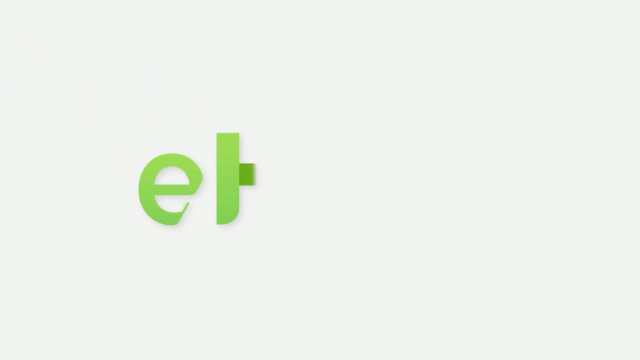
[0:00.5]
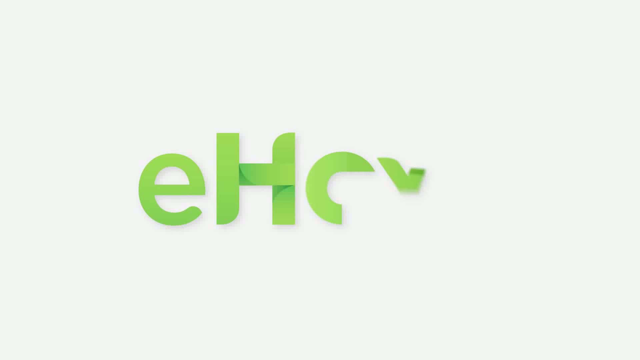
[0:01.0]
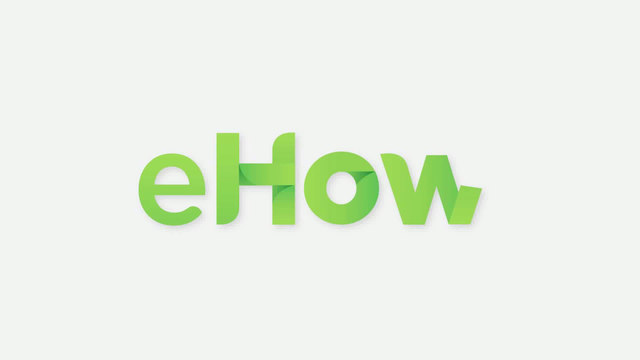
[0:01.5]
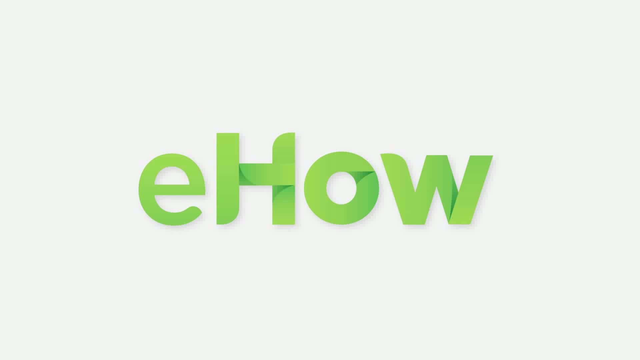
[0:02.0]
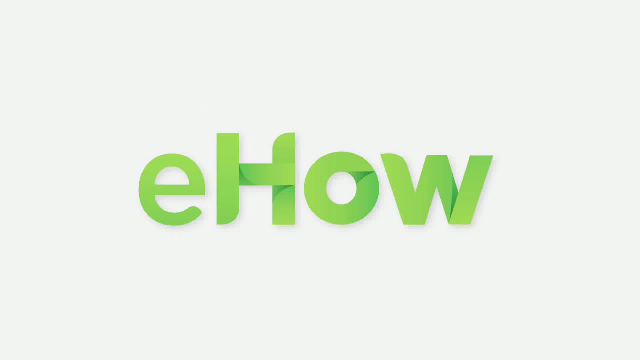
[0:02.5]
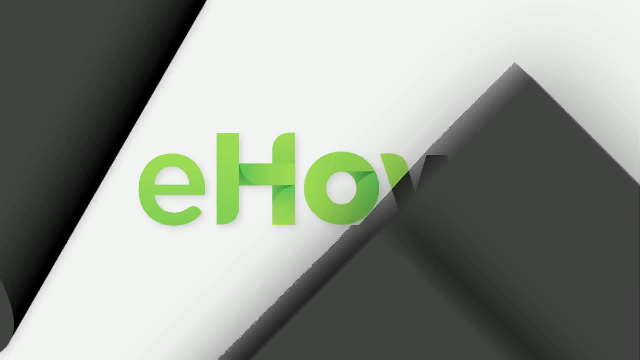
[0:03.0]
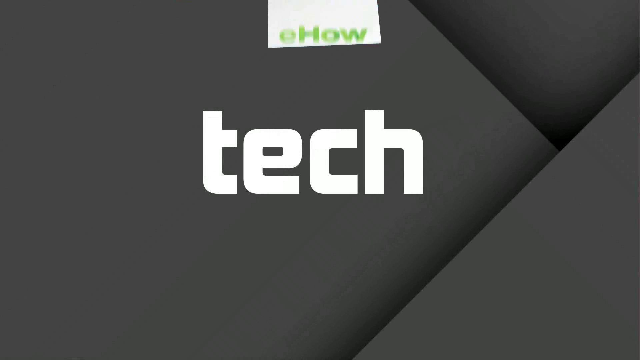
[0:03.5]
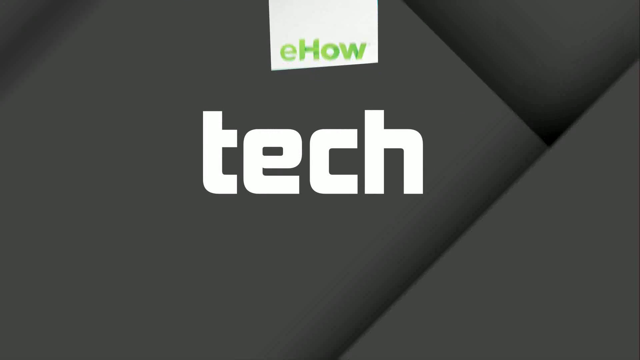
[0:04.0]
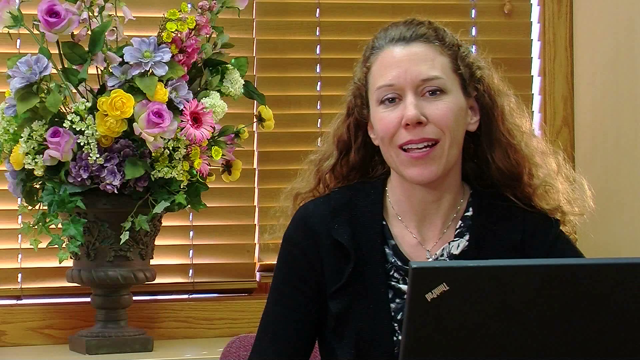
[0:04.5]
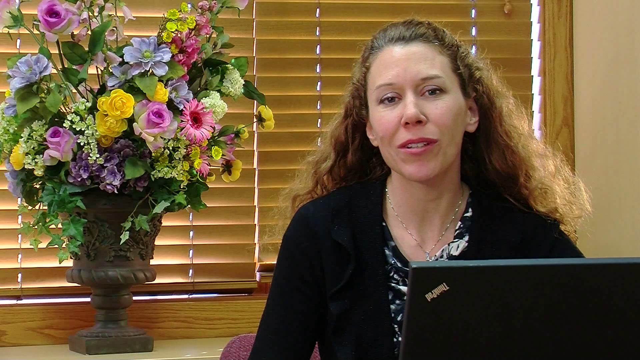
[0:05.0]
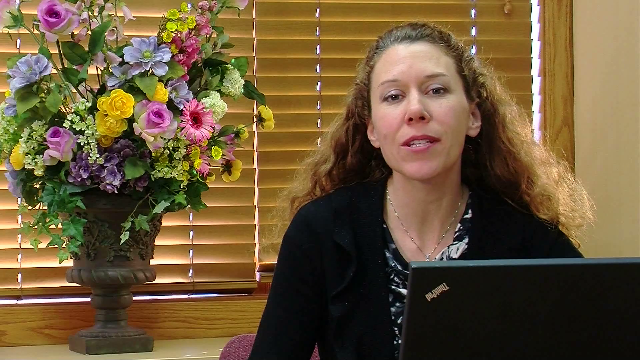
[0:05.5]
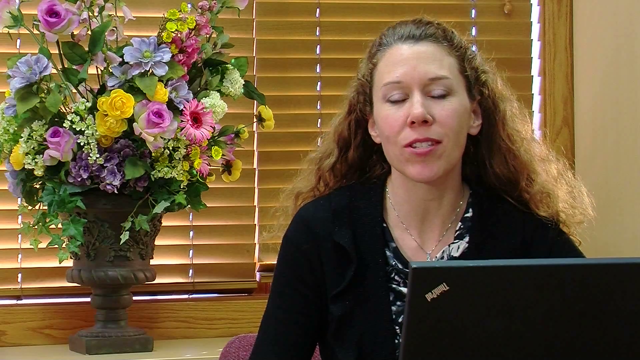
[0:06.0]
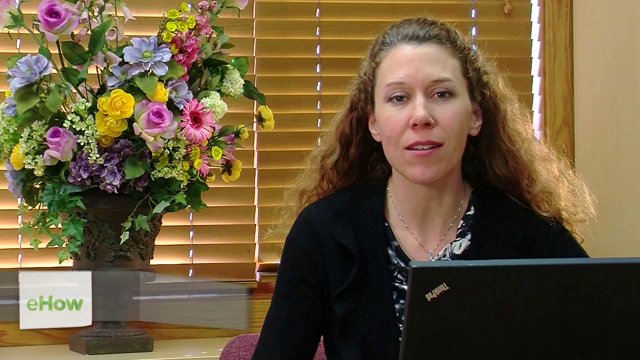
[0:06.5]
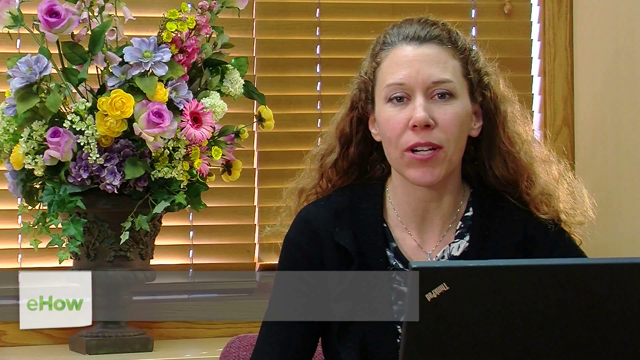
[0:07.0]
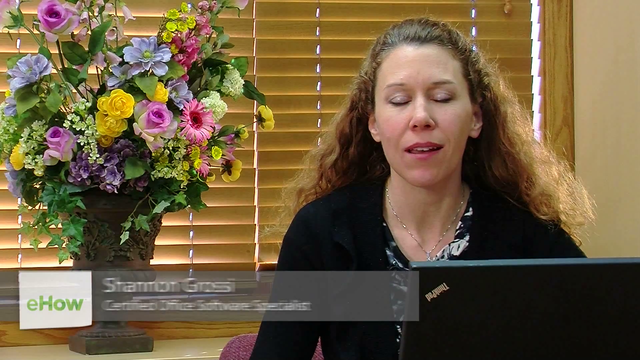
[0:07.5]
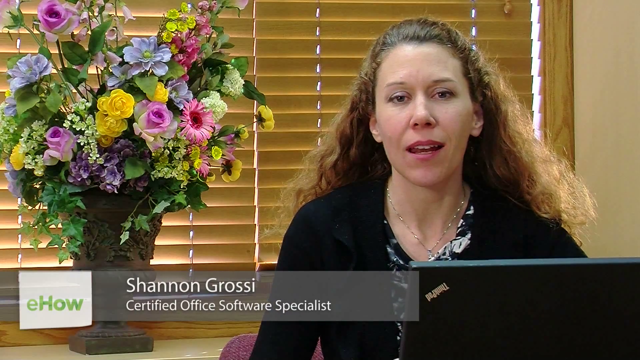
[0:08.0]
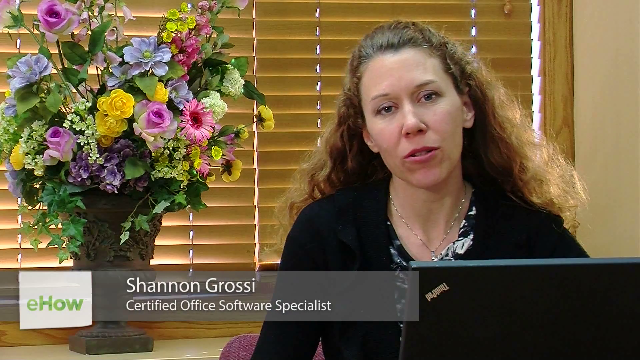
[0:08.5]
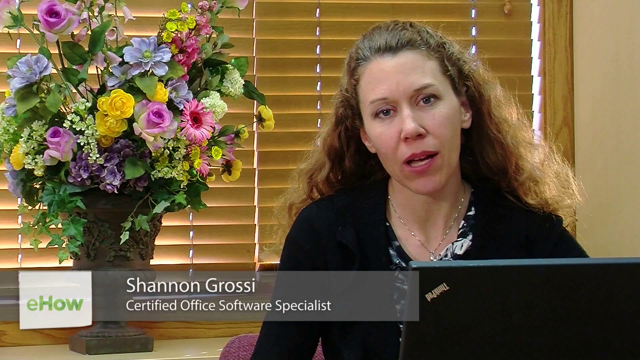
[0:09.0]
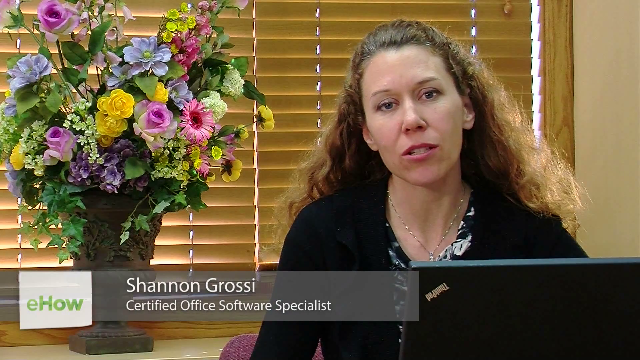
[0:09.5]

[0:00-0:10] The video opens with the eHow logo, then switches to a screen with the word "Tech" on it. Next, a woman in an office setting talks directly to the camera; she appears to be sitting behind a computer monitor. A banner appears below her reading "Shannon Grassi, Certified Office Software Specialist." To the left of her in the frame is a big vase full of flowers that look like all different types, in yellow, pink, red and blue. Behind the flowers is a window with blinds covering it.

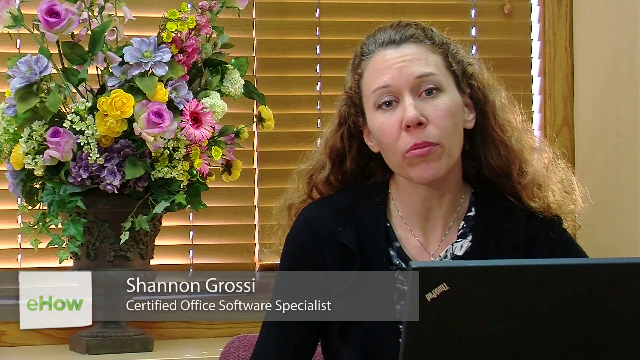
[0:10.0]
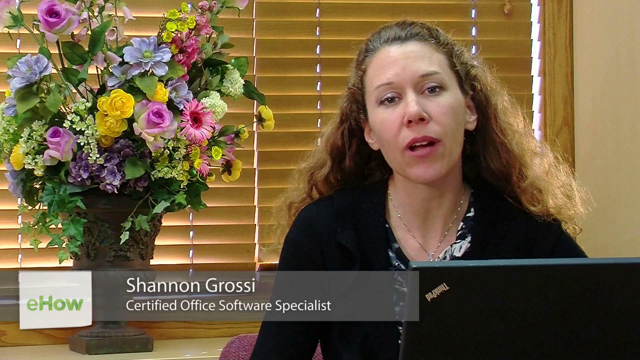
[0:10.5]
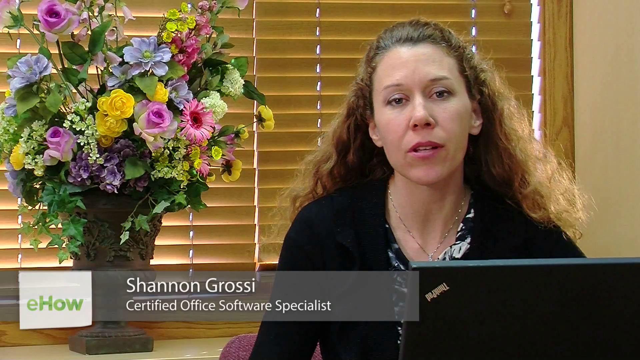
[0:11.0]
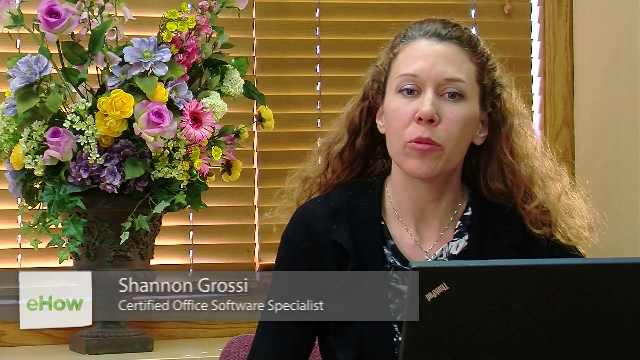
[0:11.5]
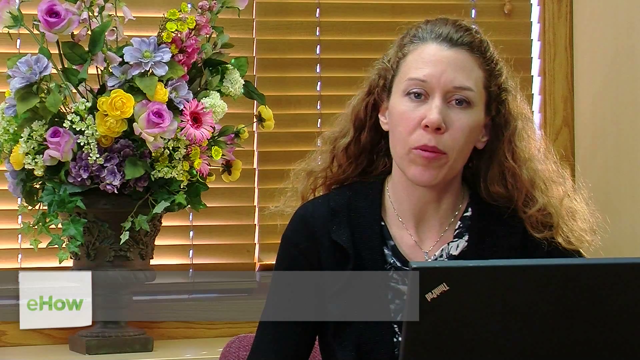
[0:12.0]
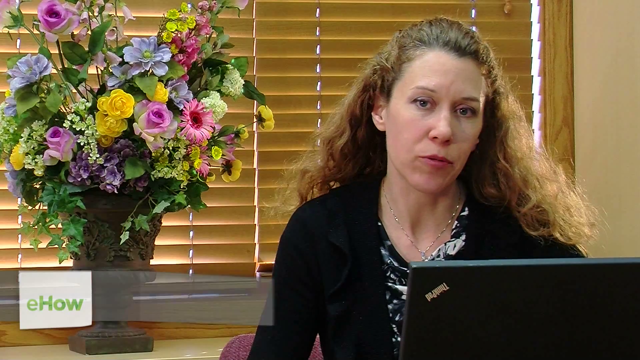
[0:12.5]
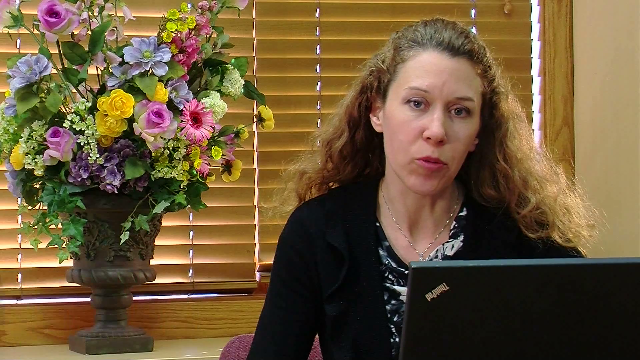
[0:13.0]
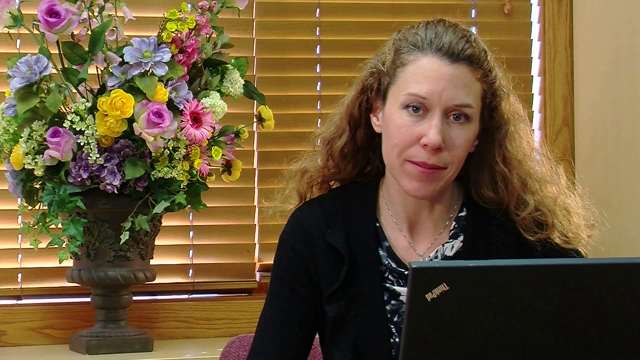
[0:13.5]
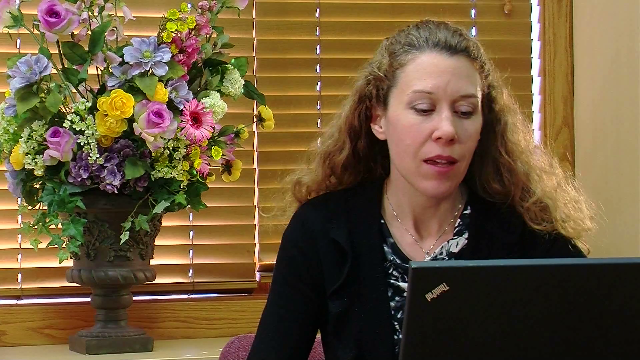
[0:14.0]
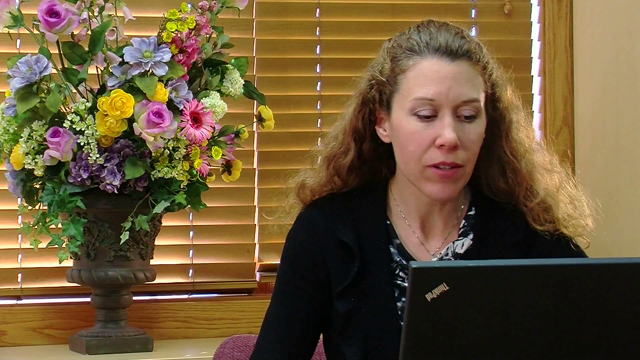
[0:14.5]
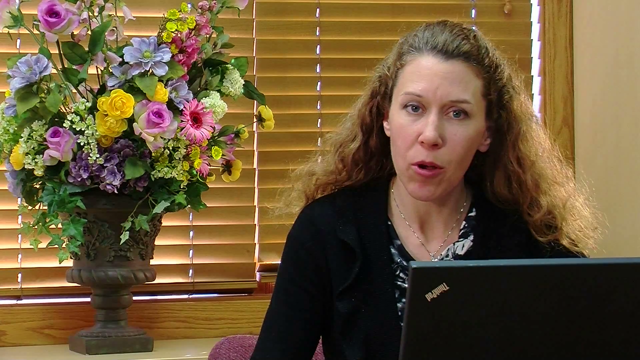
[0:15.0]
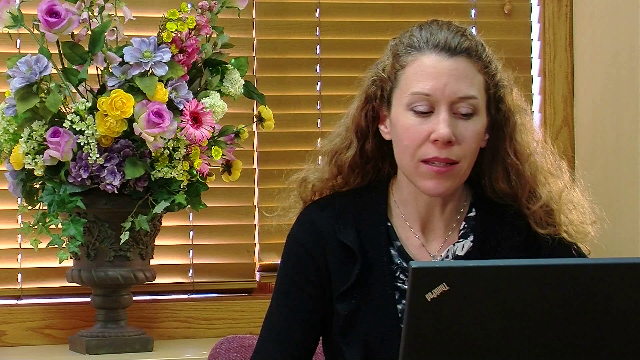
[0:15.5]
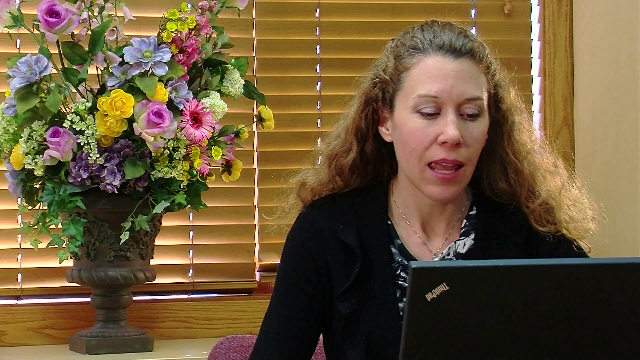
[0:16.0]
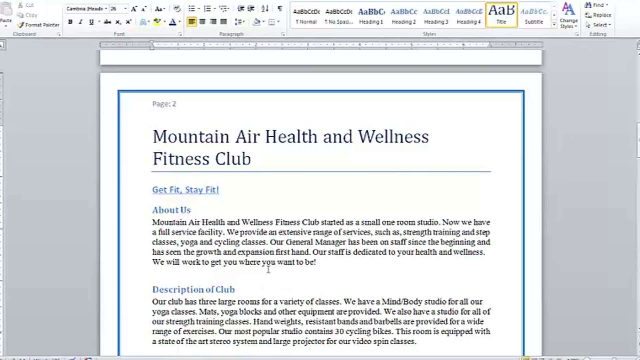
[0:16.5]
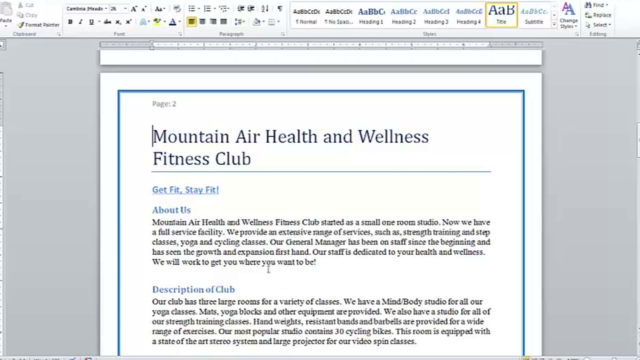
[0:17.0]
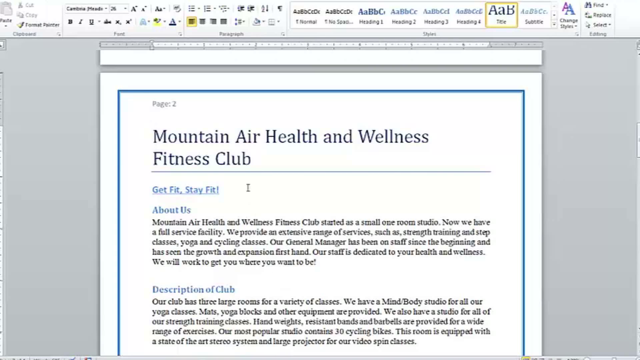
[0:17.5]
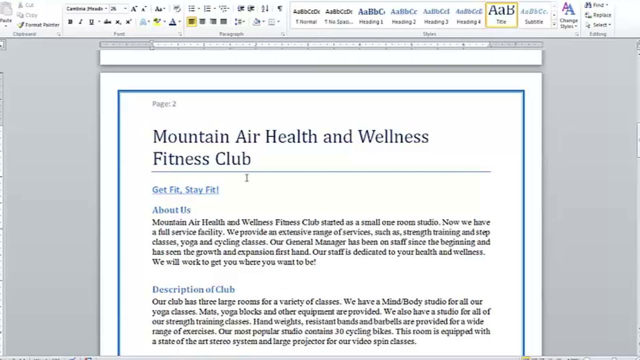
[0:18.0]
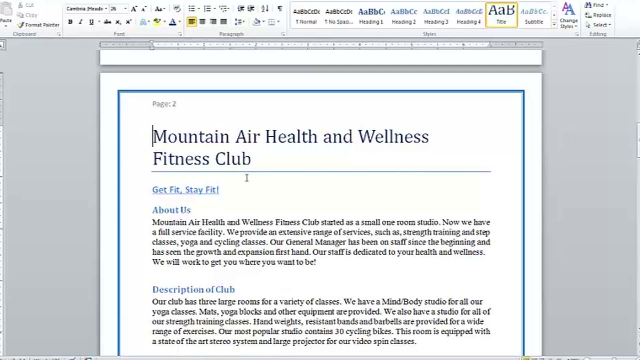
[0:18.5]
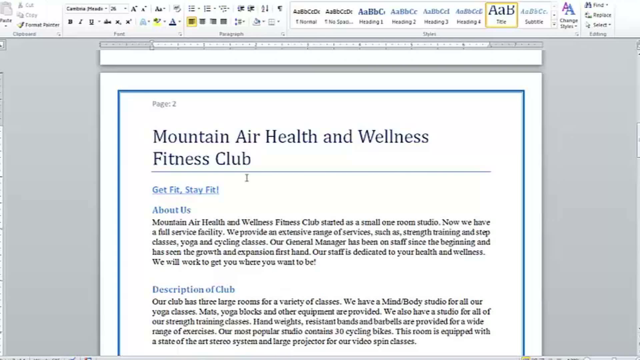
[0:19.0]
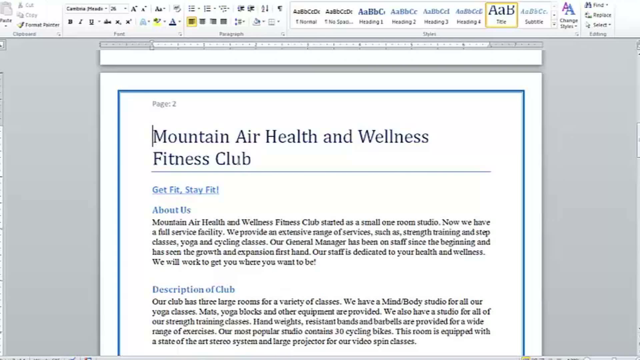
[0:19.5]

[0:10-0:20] The woman sits in an office setting, talking on camera. A banner in the lower left says "eHow" and then disappears. While talking, she looks down at the computer screen in front of her. The video then changes to a document opened in a Word program on a computer screen. The document's title is "Mountain Air Health and Wellness Fitness Club"; below it is "Get Fit, Stay Fit," then an "About Us" section, and below that a "Description of Club" section.